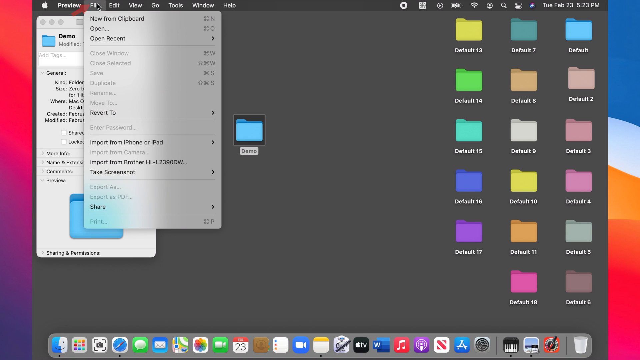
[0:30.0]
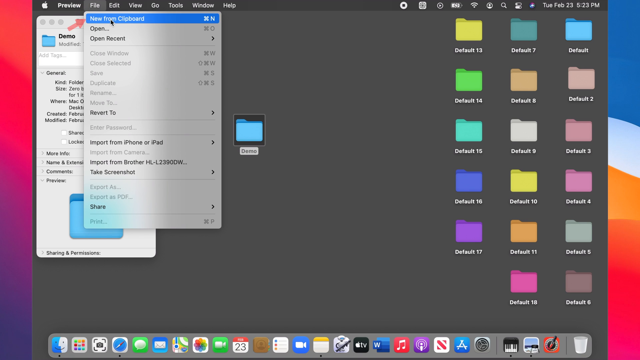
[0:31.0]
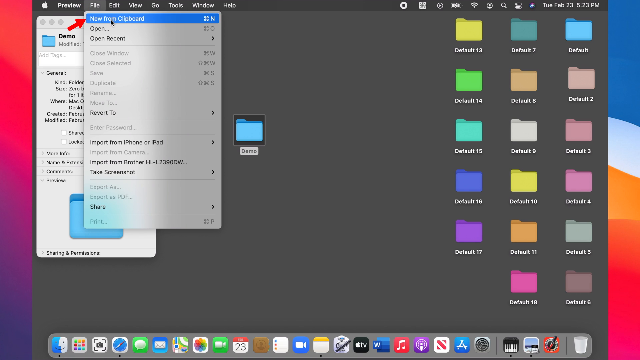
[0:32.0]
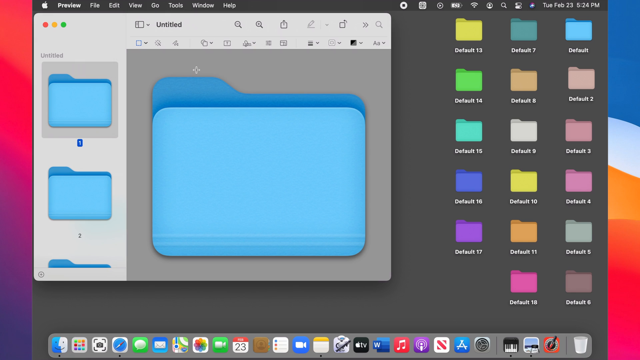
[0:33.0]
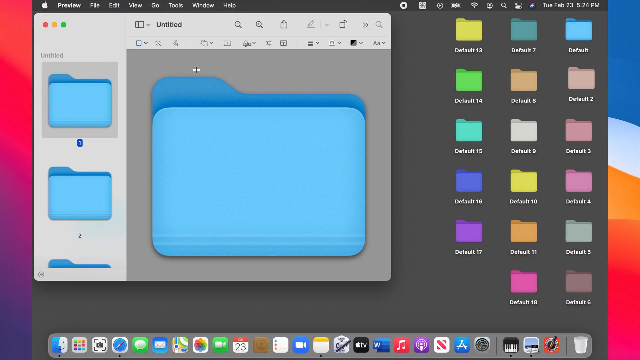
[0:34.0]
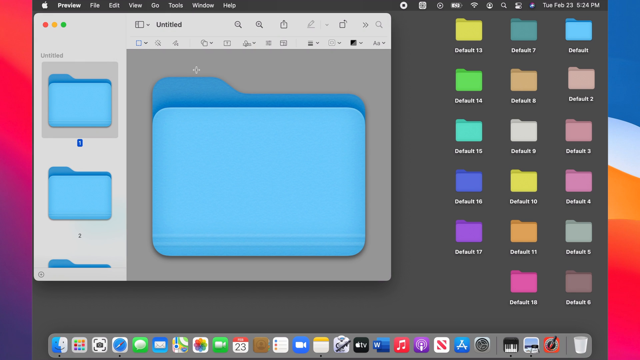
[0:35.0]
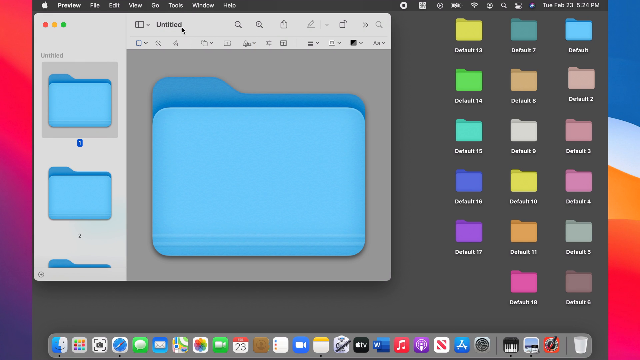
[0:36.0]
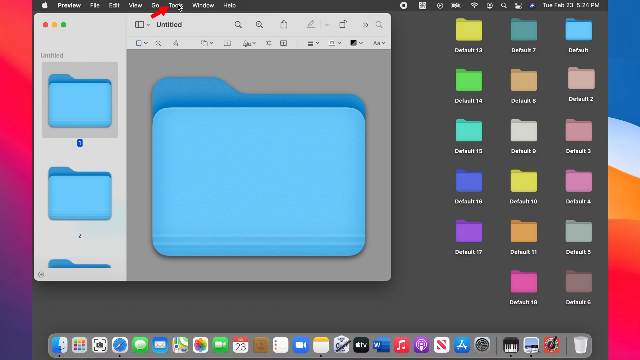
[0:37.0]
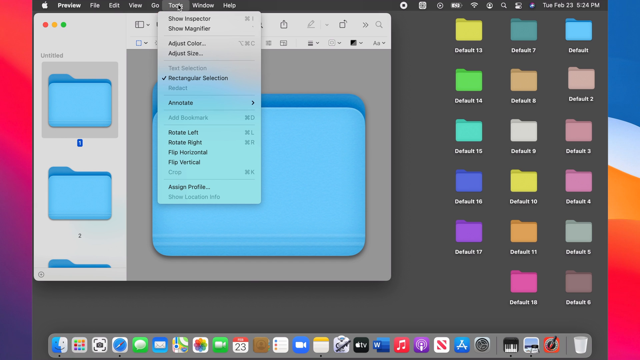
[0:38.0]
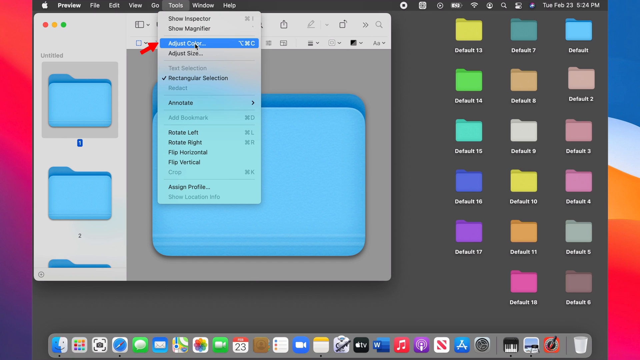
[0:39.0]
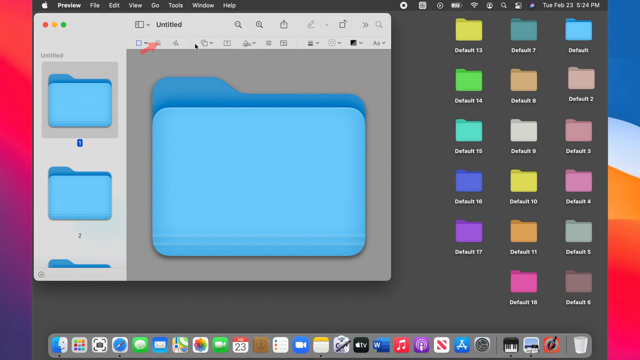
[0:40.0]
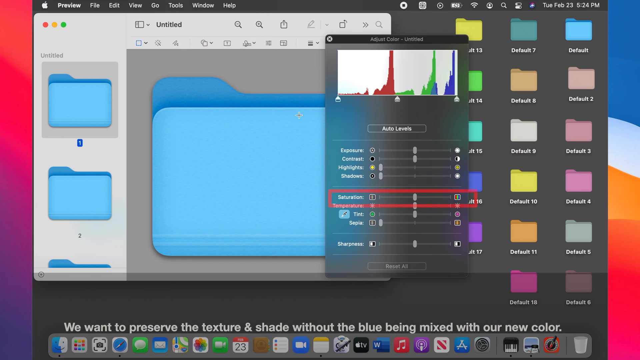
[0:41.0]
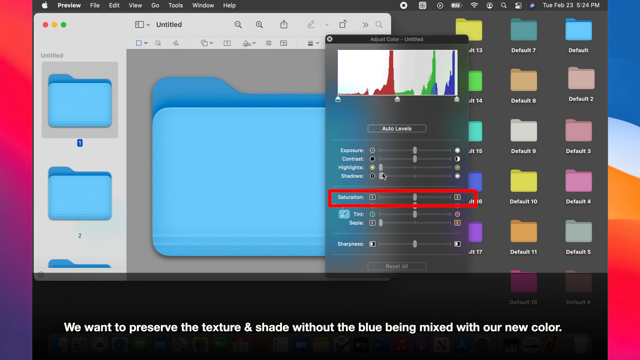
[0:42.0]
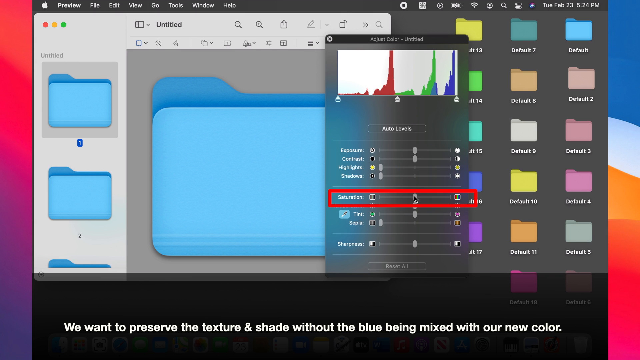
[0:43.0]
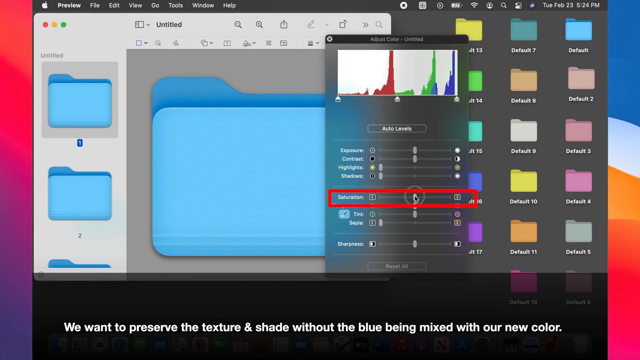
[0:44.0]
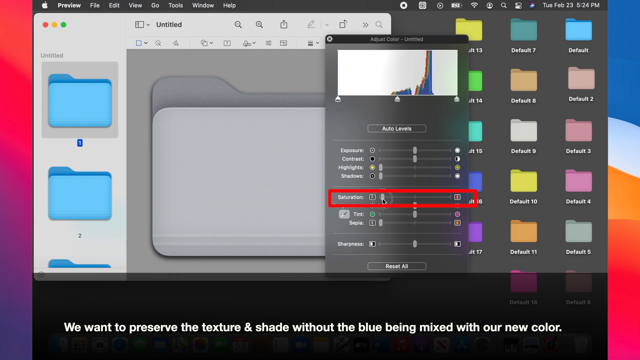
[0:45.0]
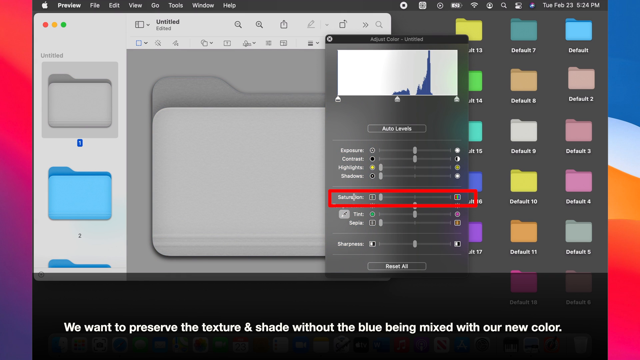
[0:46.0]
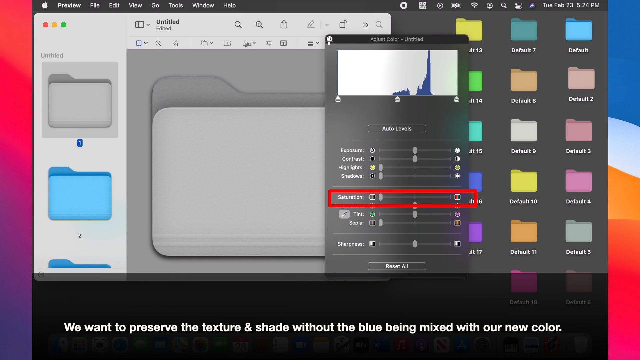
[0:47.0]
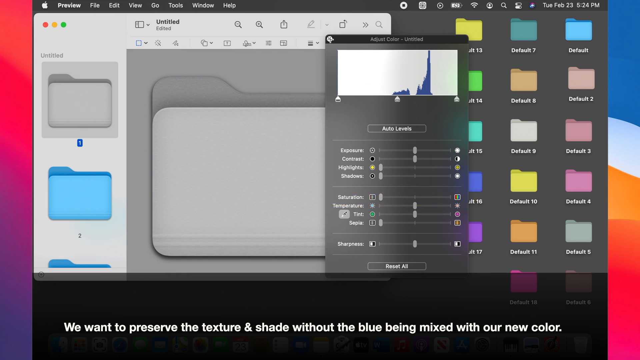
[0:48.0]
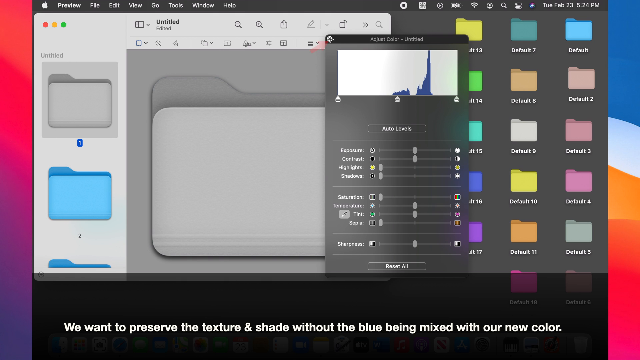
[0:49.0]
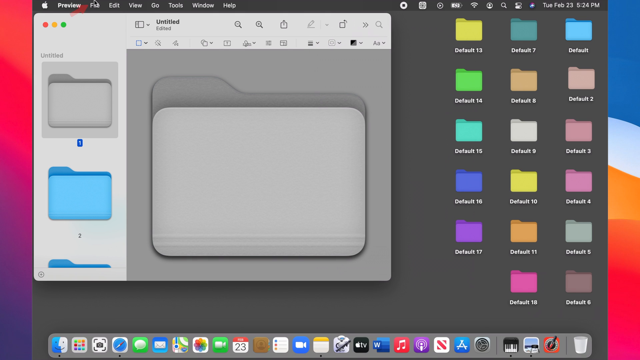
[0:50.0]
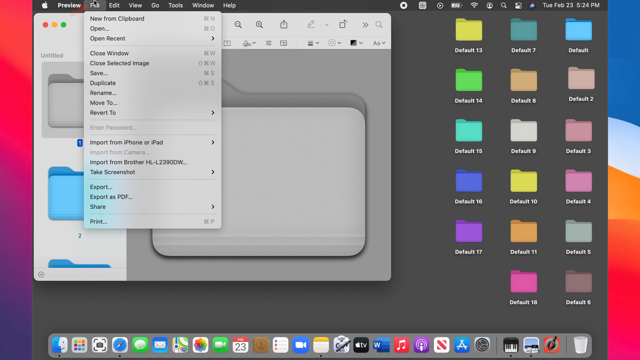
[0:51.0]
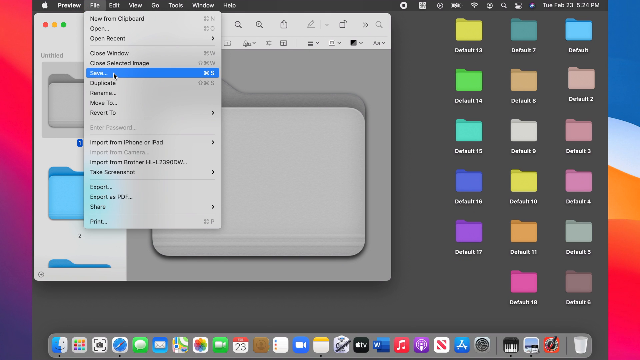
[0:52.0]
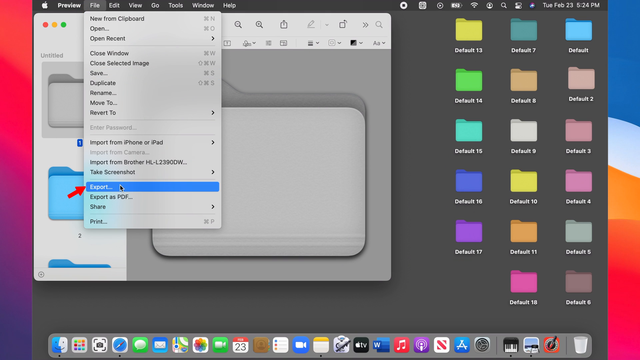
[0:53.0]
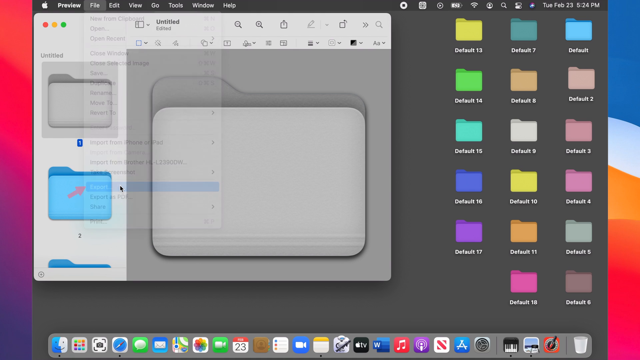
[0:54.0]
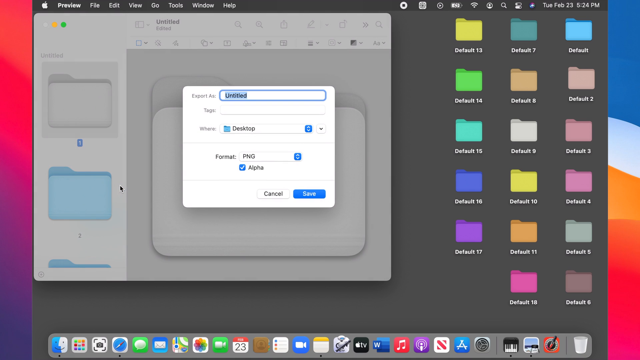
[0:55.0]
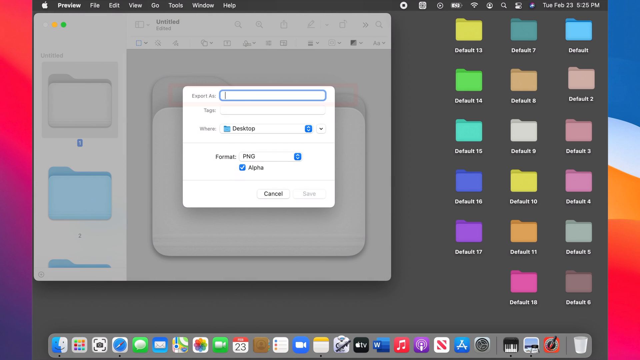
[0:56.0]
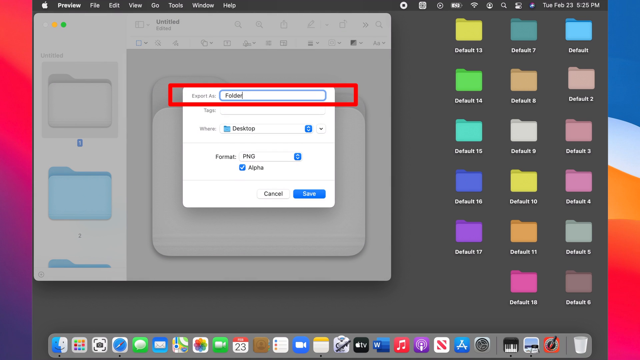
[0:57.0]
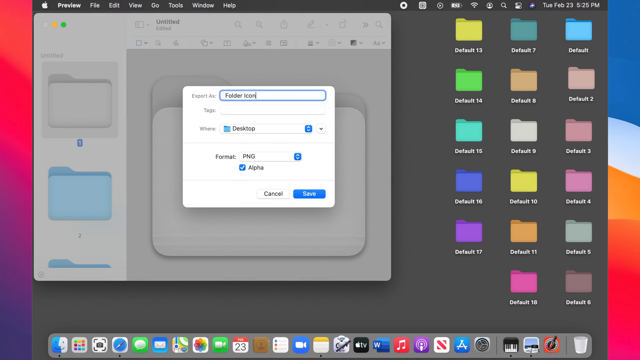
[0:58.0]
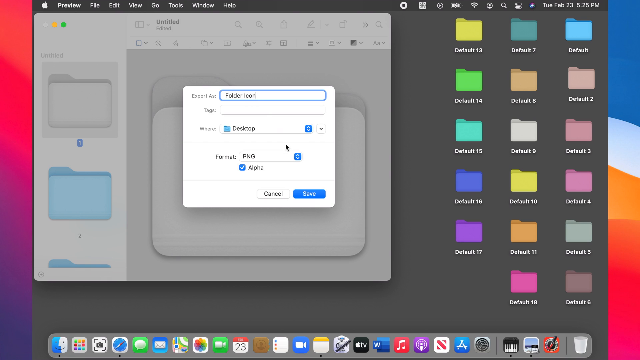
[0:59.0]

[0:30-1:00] The user clicks File, where "new item clipboard" appears, and clicks it; a big blue file kind of pops up in the center of the desktop. Another button is clicked, its label unclear, possibly "about", bringing up a whole bunch of data about this file, with something highlighted. Everything in the background is folders: on the left side the big folder has turned gray instead of blue, and on the right side of the desktop are many different colored folders, basically every color of the rainbow. In the middle there is a red highlighted portion made when the file was clicked. That window is closed, another button that is hard to see is clicked, and the user goes to "folder icon" and hits a start button that pops up, which has a blue background and white lettering.